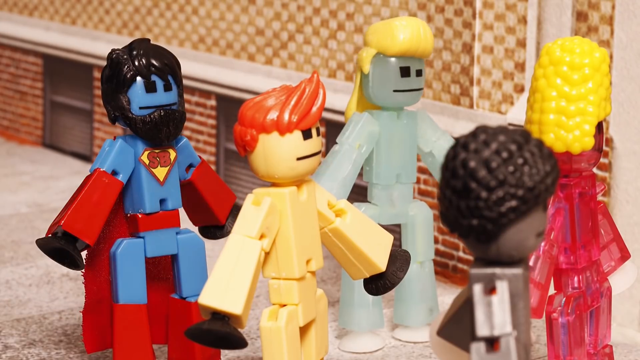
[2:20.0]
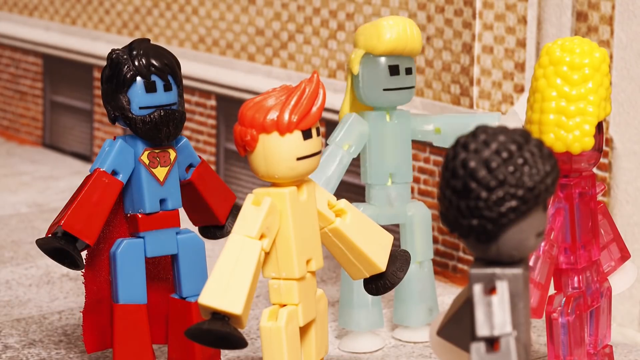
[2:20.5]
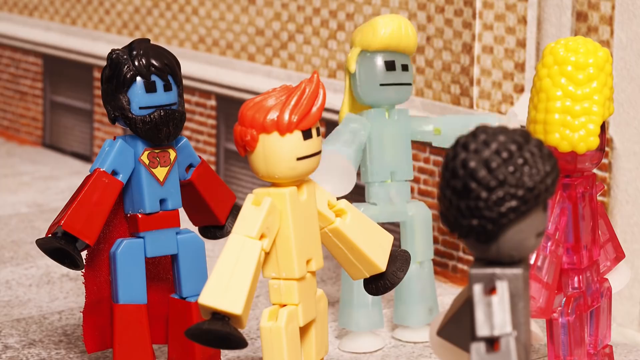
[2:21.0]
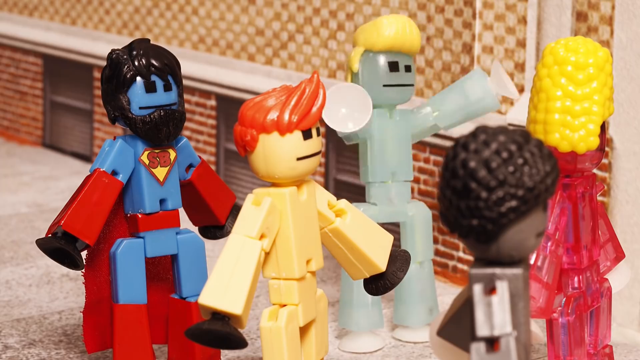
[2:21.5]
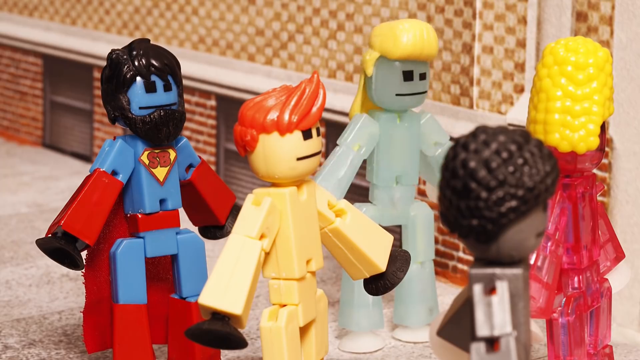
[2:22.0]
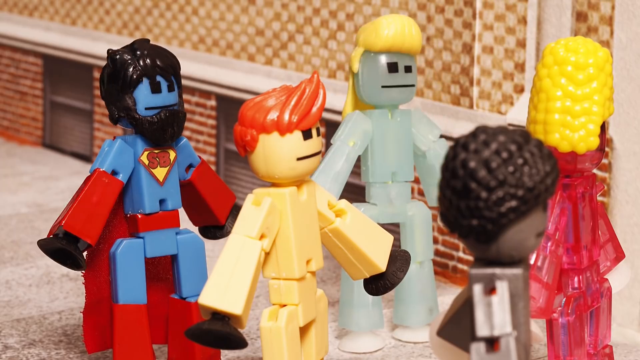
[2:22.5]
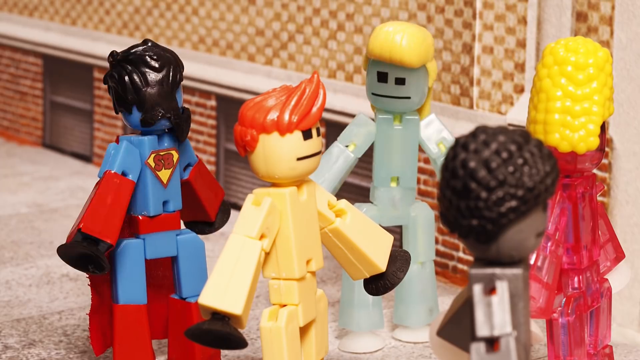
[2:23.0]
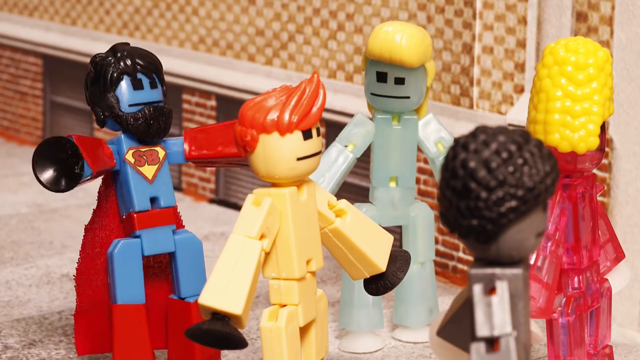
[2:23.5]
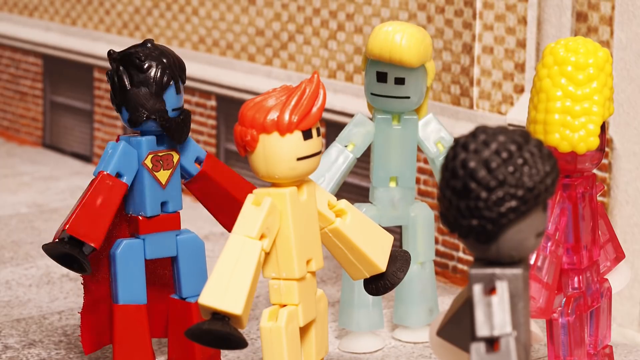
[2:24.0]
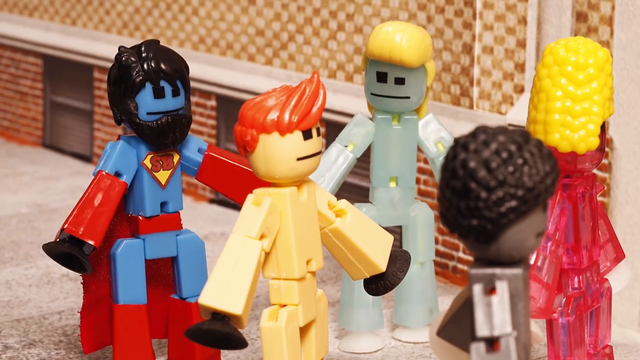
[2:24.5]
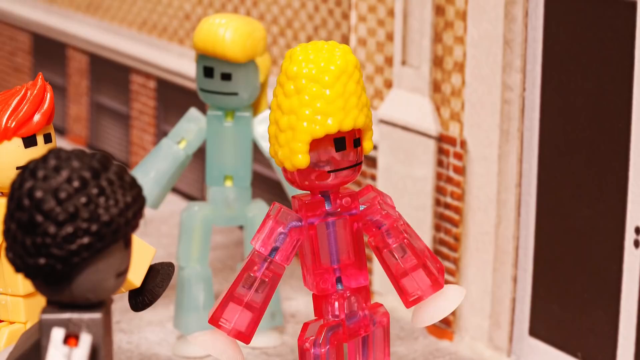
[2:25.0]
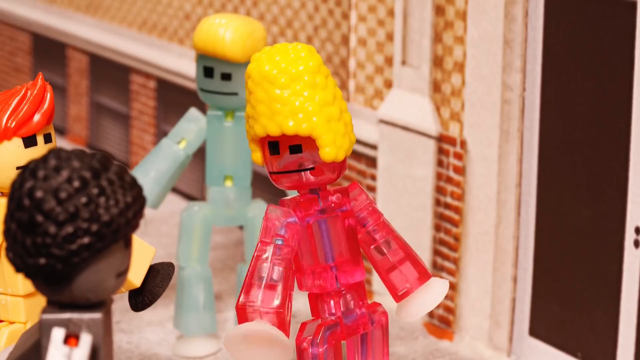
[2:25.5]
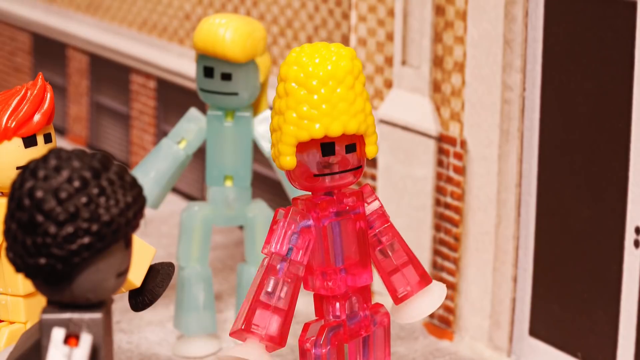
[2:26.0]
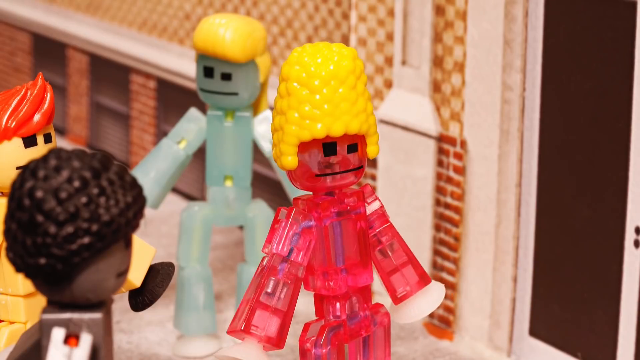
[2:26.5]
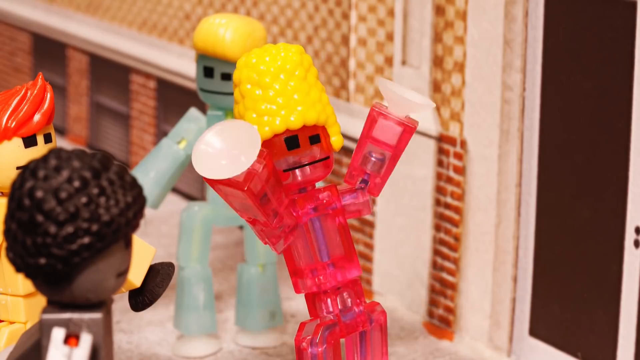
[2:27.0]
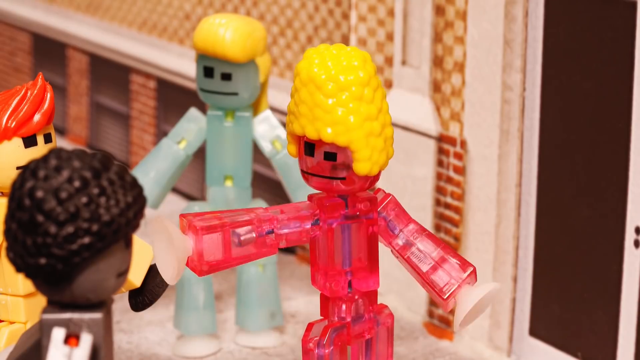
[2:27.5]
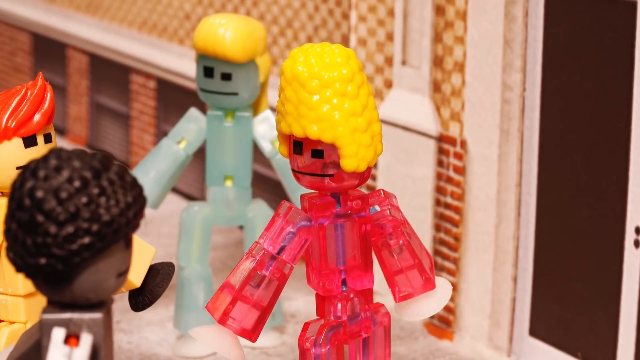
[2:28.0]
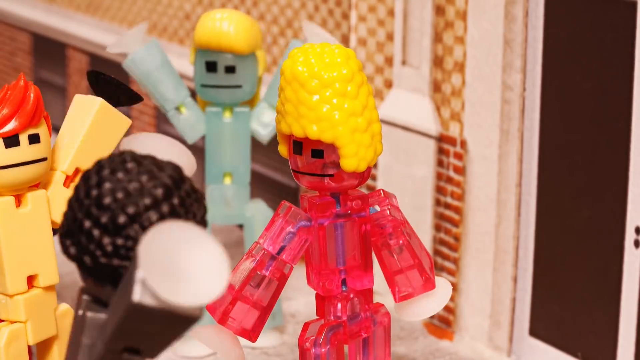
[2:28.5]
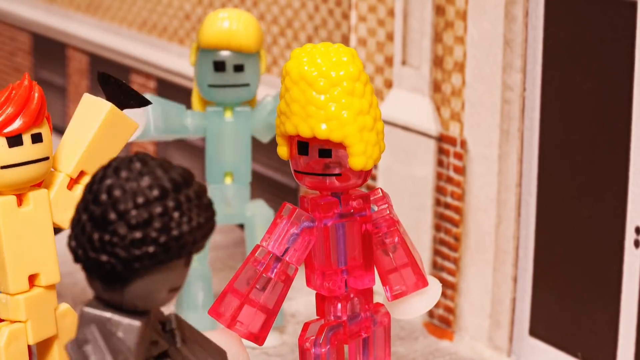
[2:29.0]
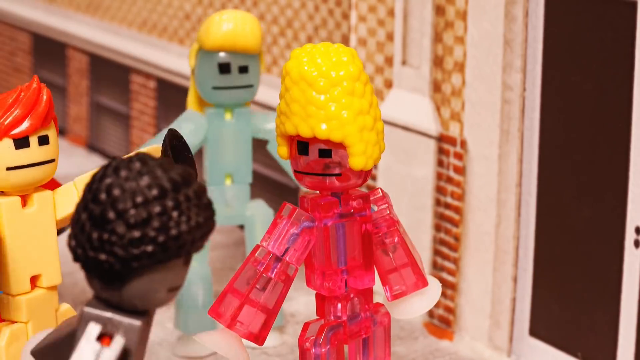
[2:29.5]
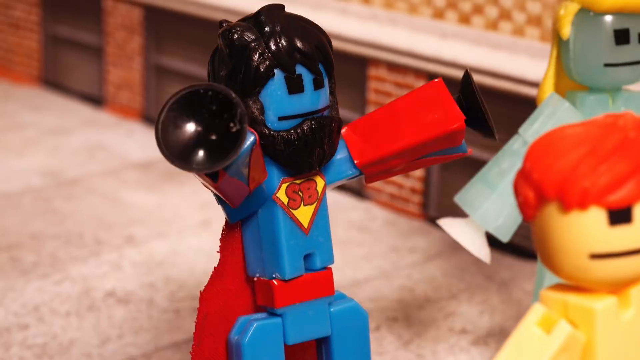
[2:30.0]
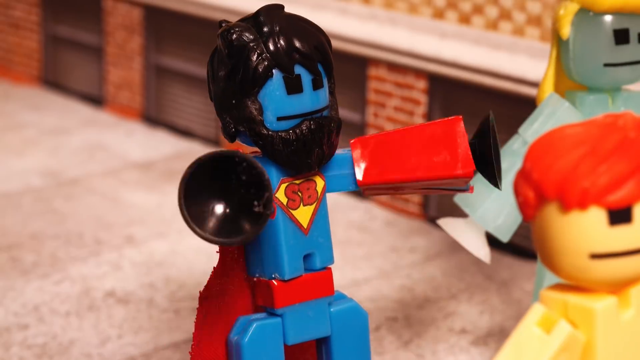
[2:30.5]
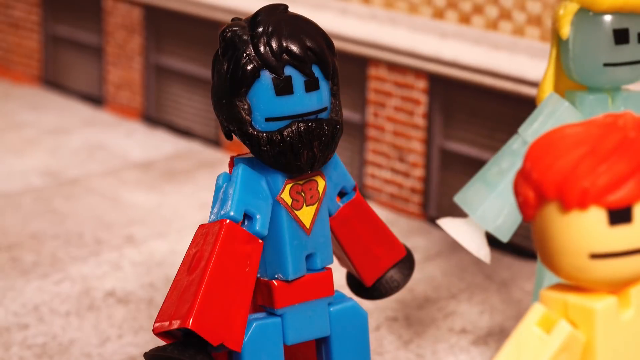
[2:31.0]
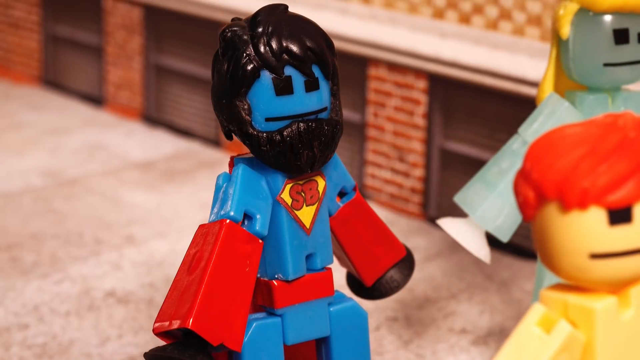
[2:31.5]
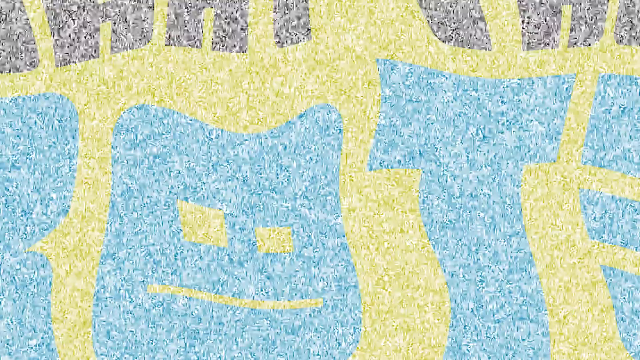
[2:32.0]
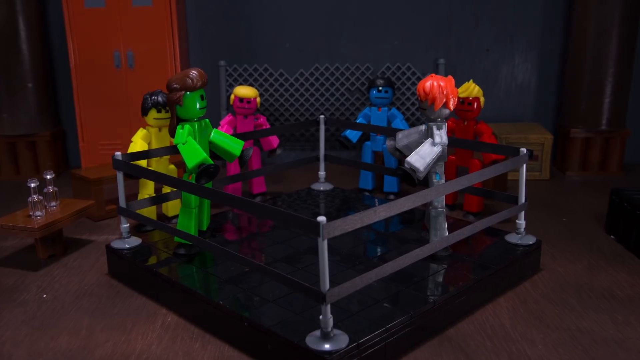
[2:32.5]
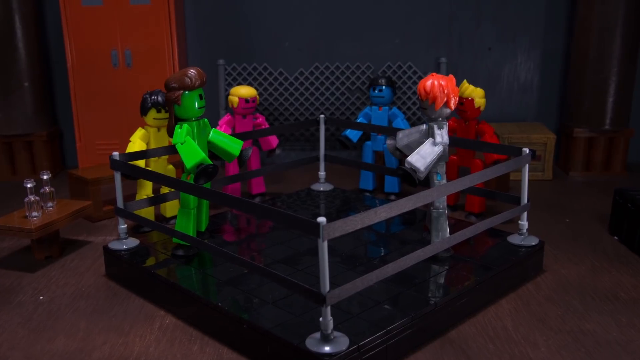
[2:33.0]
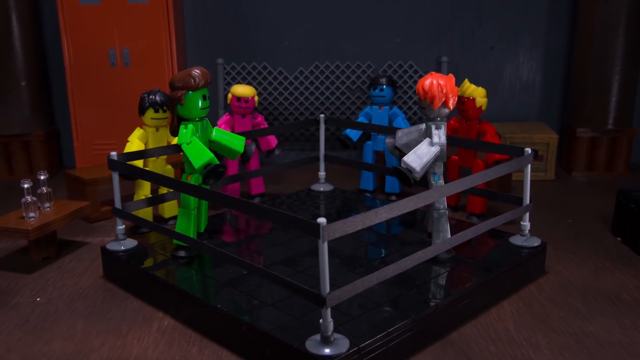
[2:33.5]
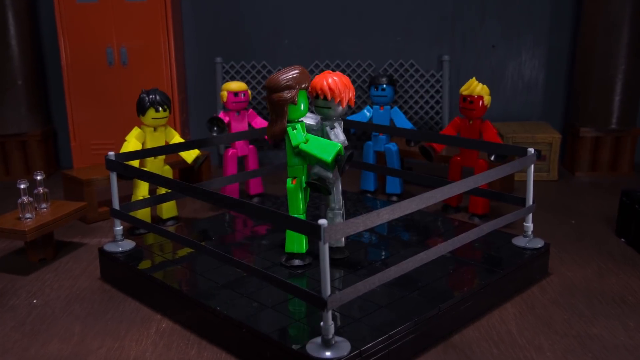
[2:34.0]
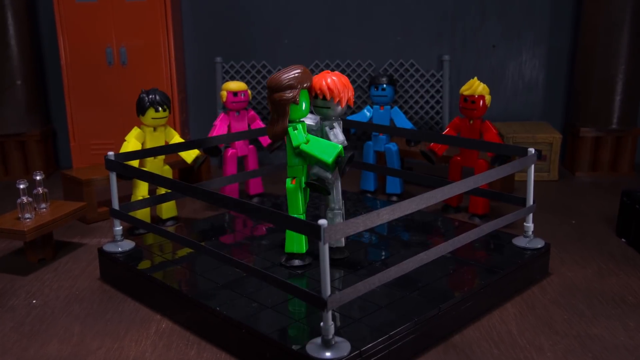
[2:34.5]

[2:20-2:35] A bunch of robot-like humanoid figurines of different colors and with different hair are on a sidewalk in front of a building. One of them is a Superman-like figure. One of the four non-Superman figurines raises its arms, seemingly talking, and the Superman figure turns to its left to talk to it, gesturing around. The camera switches to focus on a red, almost transparent figurine with what is presumably blonde hair, though the hair looks like corn on its head. This figure gestures around with its arms, and the other figurines start gesturing around too, seemingly cheering. The scene changes to a boxing ring with two people in the ring and several people outside it watching. The two figurines in the middle approach each other and seem to hug and seemingly kiss.